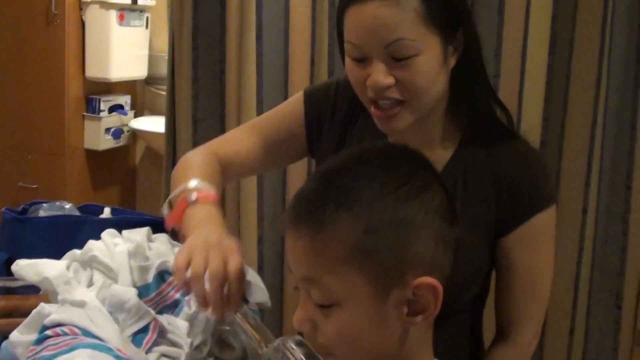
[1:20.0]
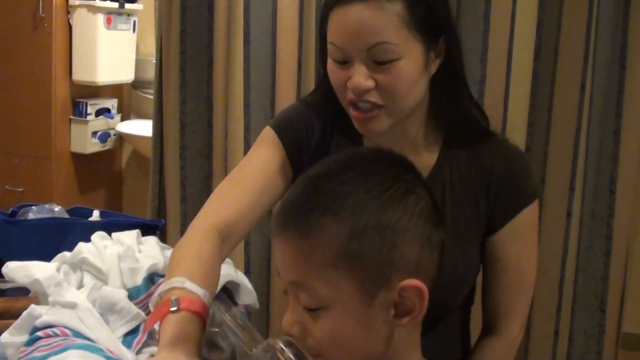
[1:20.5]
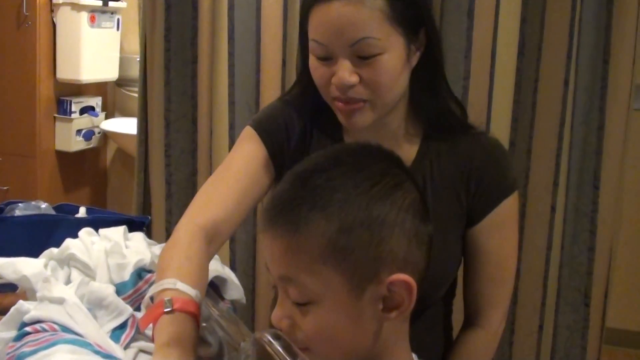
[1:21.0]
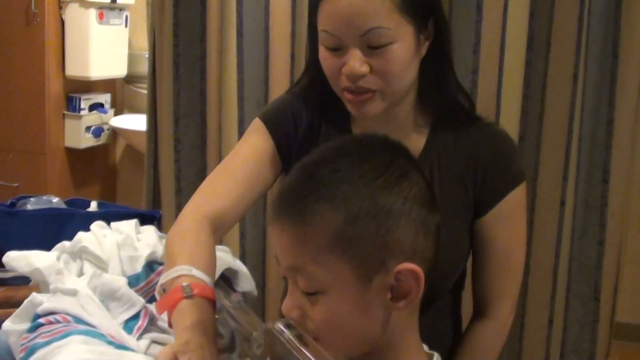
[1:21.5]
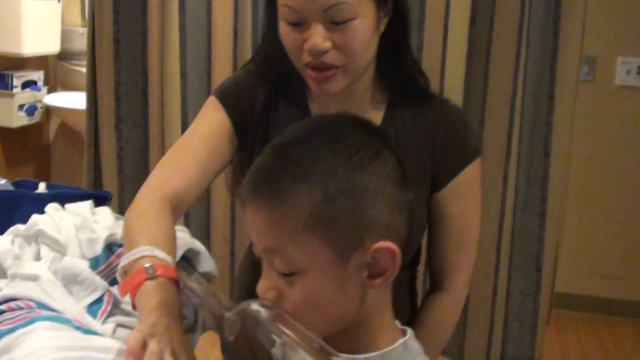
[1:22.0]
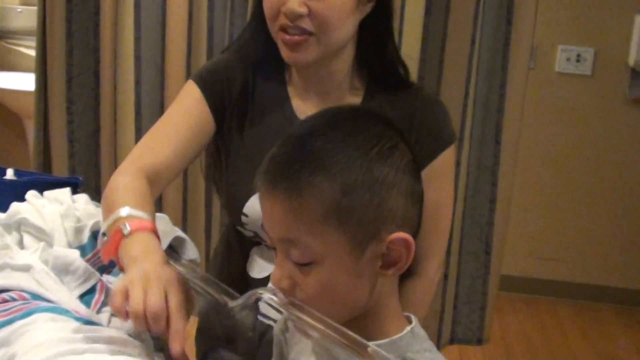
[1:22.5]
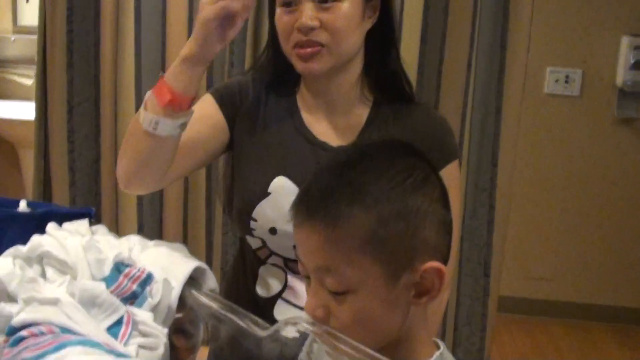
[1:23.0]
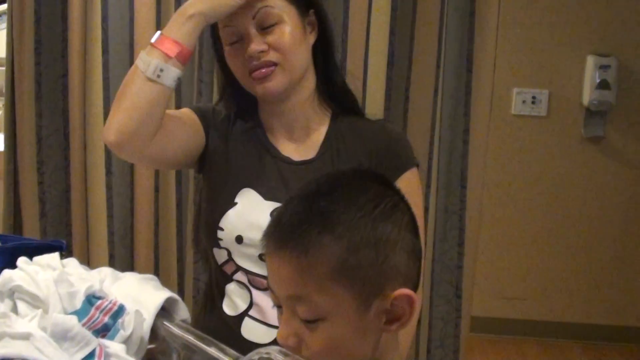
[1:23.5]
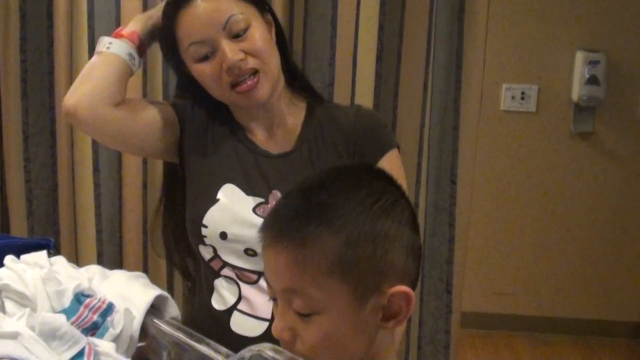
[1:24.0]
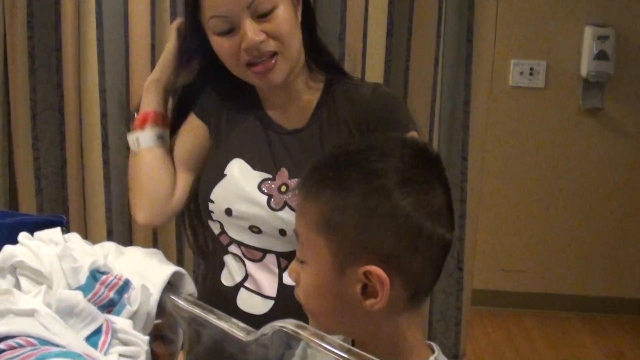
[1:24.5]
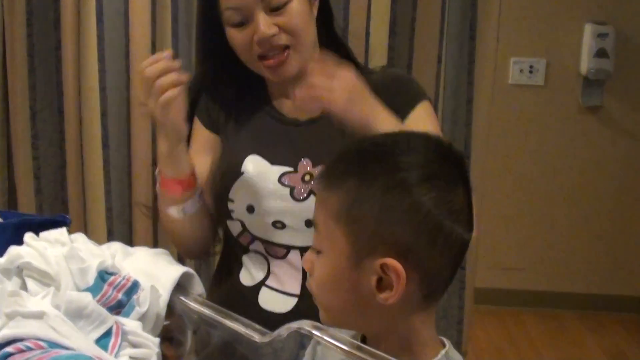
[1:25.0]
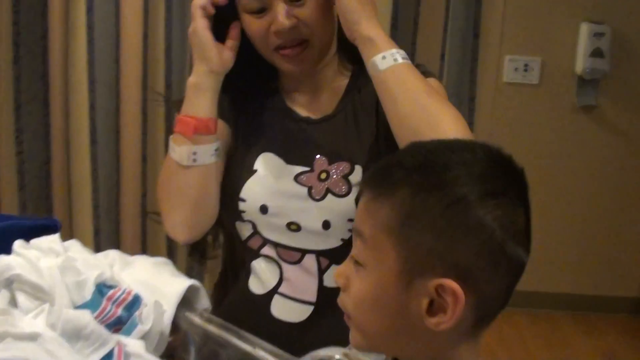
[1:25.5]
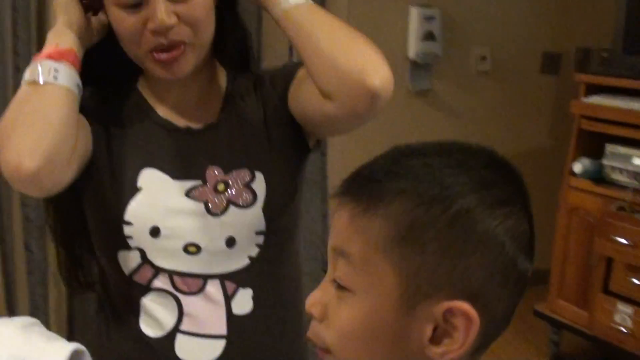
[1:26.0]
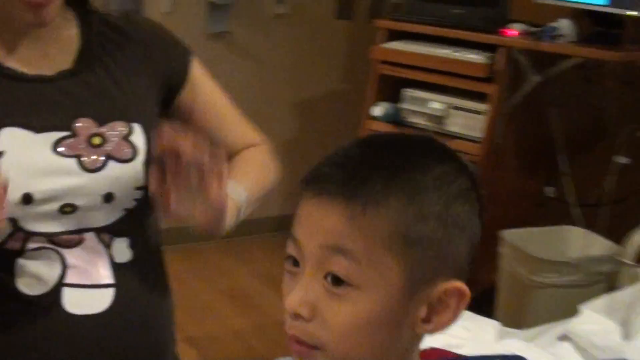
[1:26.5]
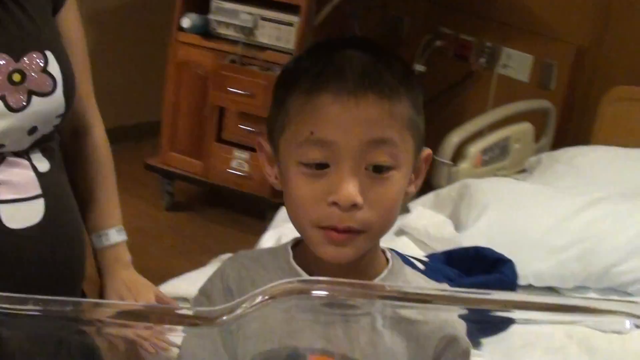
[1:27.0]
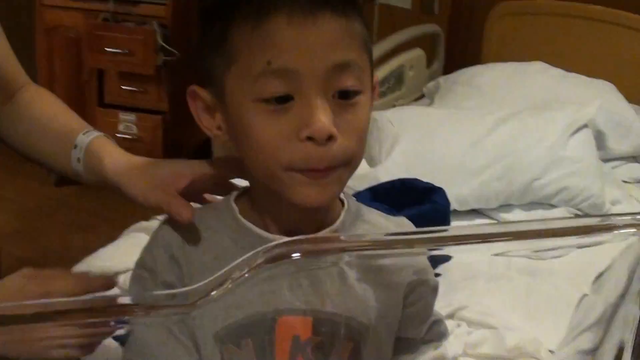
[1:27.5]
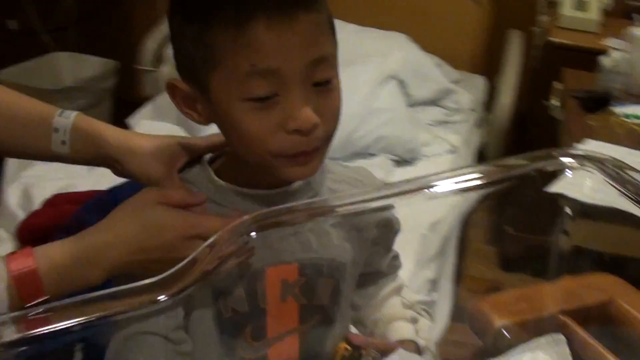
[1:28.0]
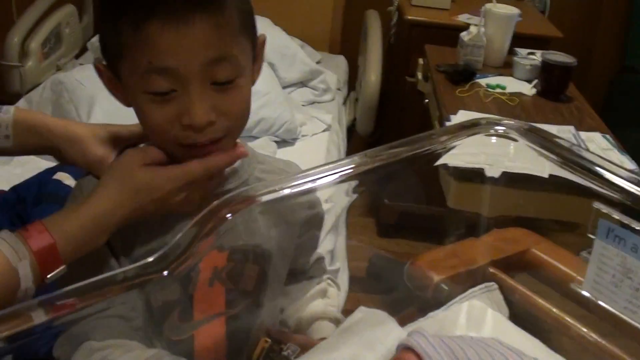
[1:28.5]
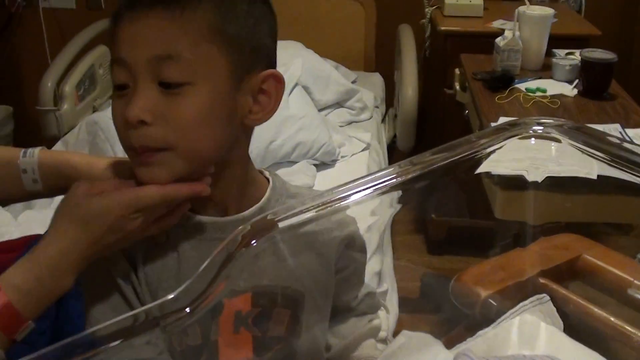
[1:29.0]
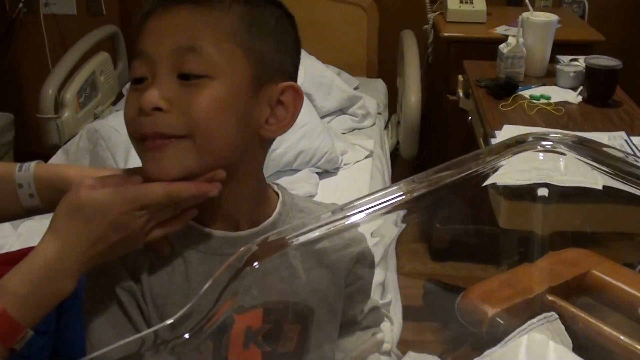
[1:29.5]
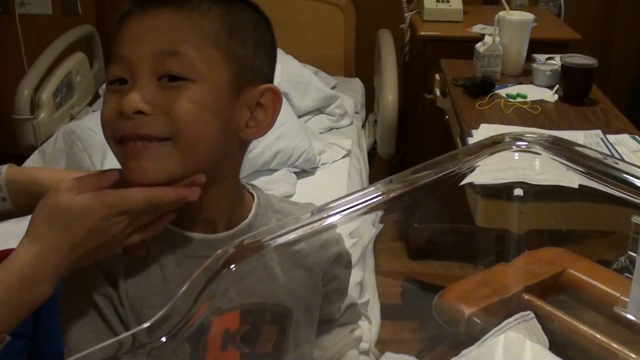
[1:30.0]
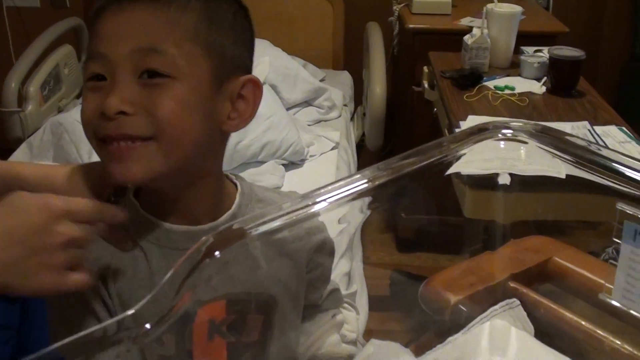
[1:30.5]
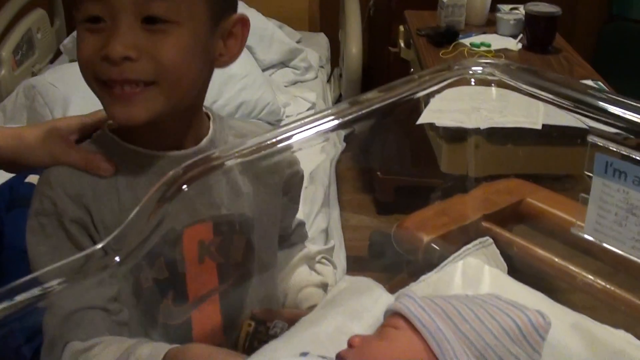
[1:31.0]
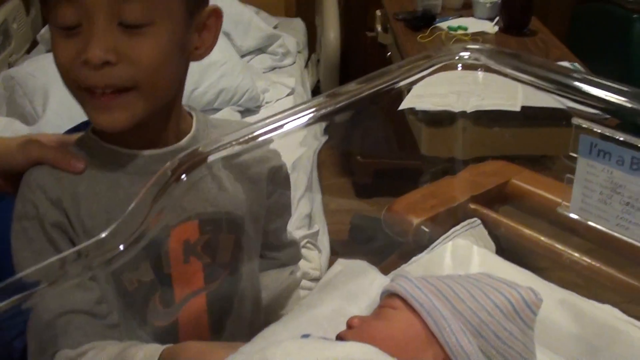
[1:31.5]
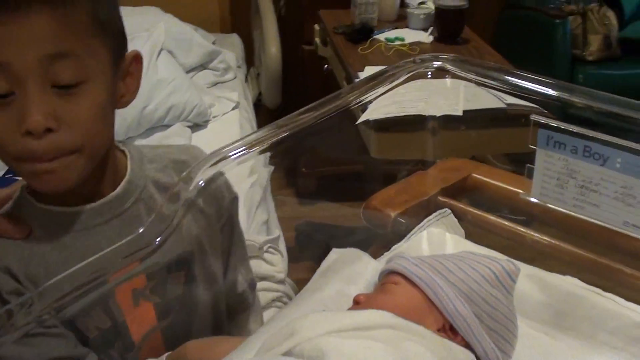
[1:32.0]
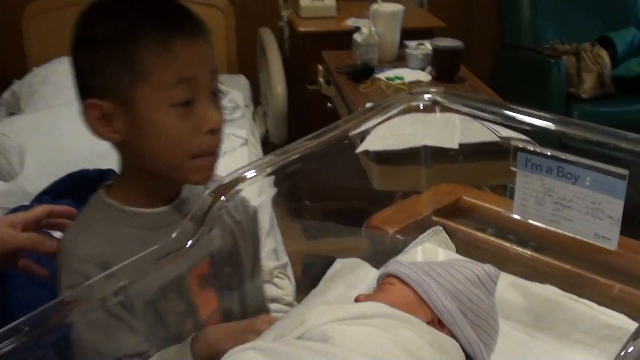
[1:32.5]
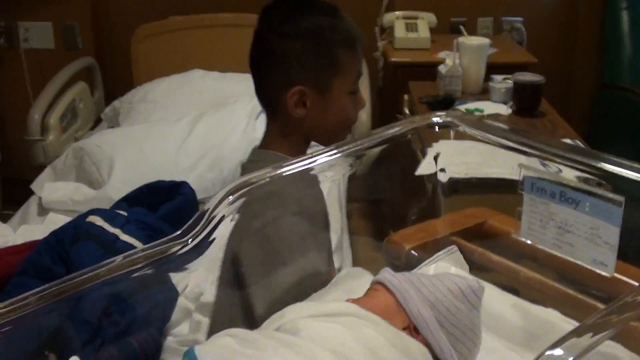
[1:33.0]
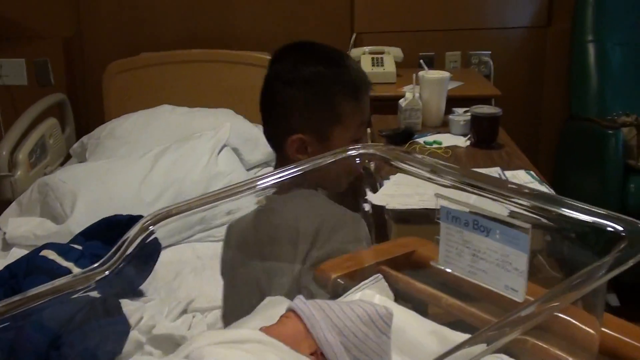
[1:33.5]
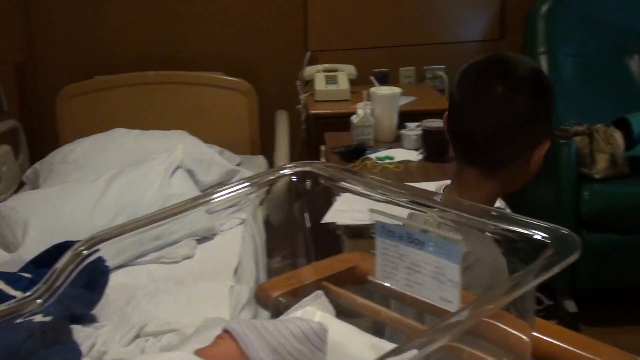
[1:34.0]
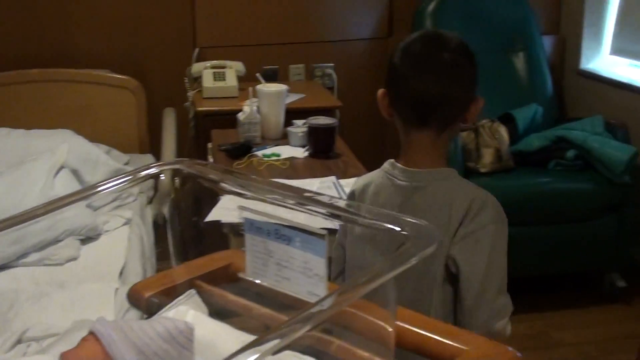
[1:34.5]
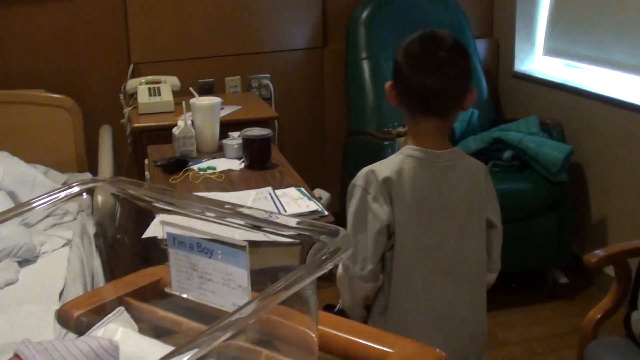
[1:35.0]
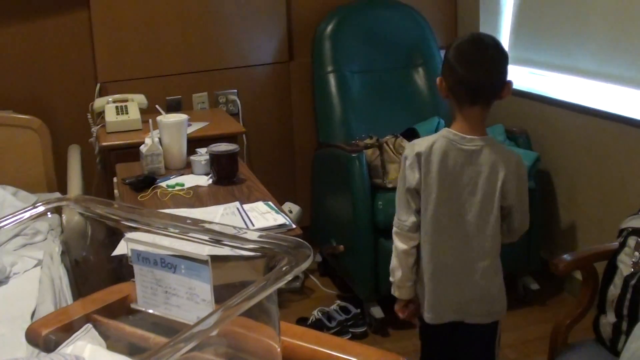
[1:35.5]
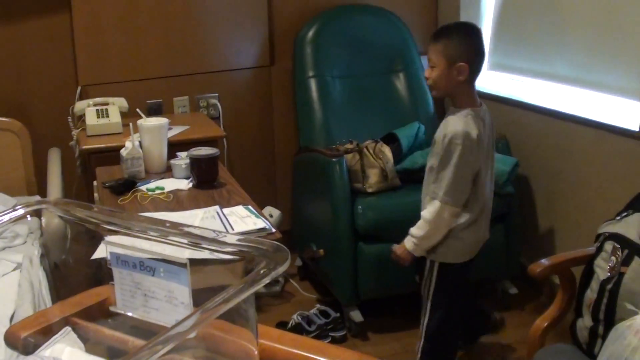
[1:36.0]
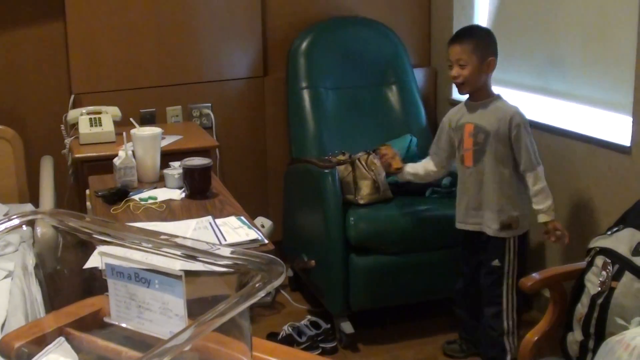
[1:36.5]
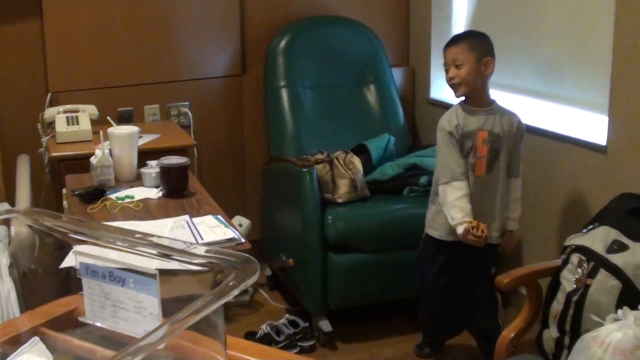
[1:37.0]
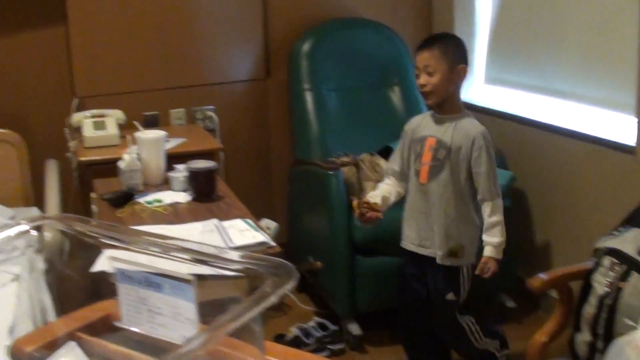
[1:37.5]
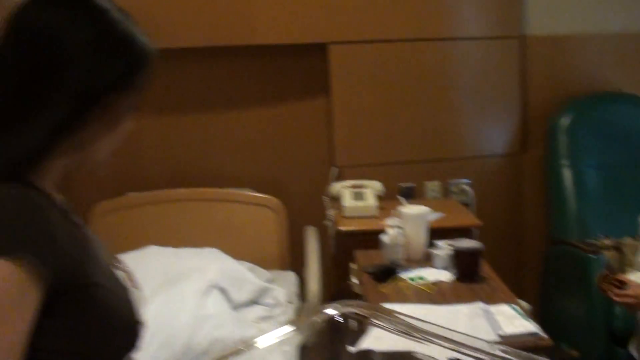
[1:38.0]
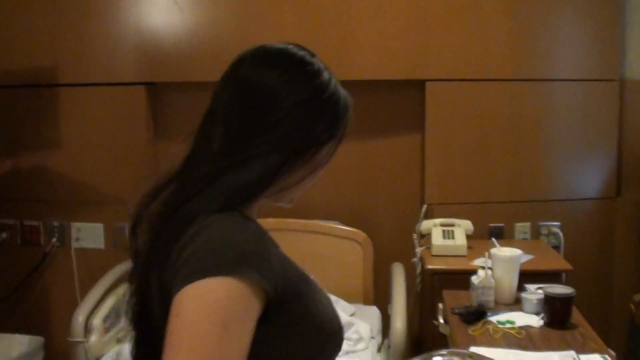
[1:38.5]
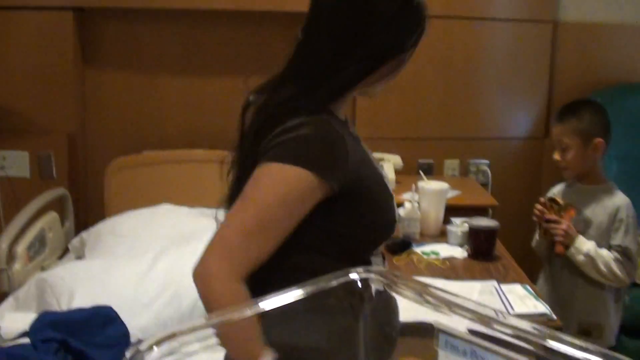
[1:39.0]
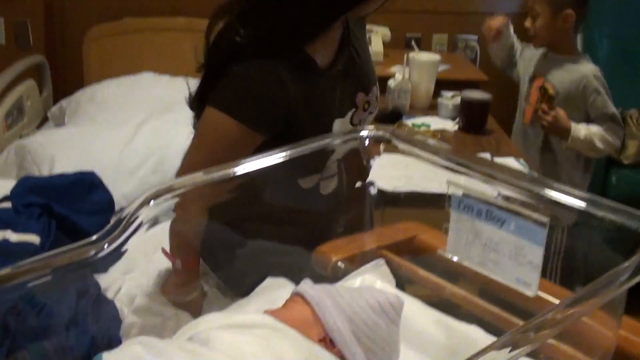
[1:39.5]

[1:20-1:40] The mother wears hospital bracelets on her wrist and a black t-shirt with a Hello Kitty logo design. They are in the hospital room, and there looks to be a divider behind her, so the room is possibly shared. She has her hand on the blanket in the baby's bassinet, touches the baby, points and gestures, and then runs her hand through her hair. The little boy is still looking down into the bassinet at the baby. The mother puts one hand behind the boy's neck and the other under his chin, looks up at him and points at his face; he has a big smile. He then walks away from the baby toward a green chair in the corner of the room, gesturing with his hand and playing with his toy. The mother moves to sit on the bed facing the boy. The baby is still asleep in the bassinet, with a white blanket with blue and pink stripes.